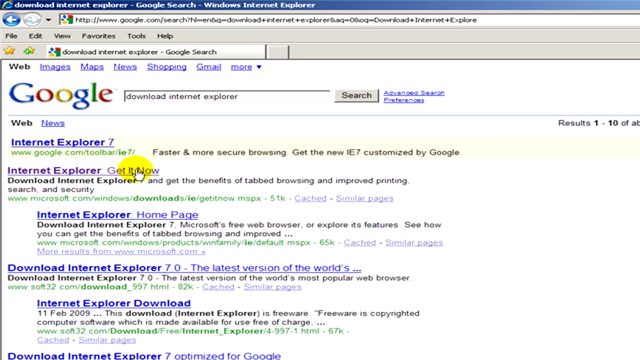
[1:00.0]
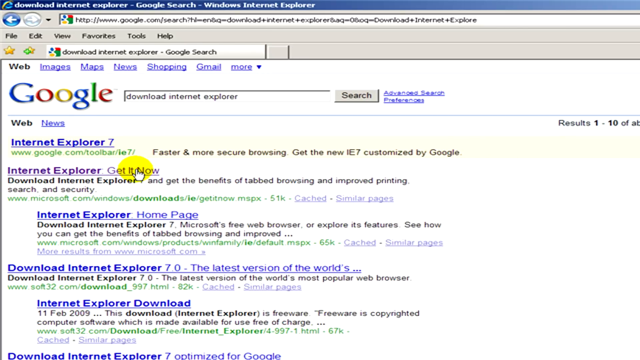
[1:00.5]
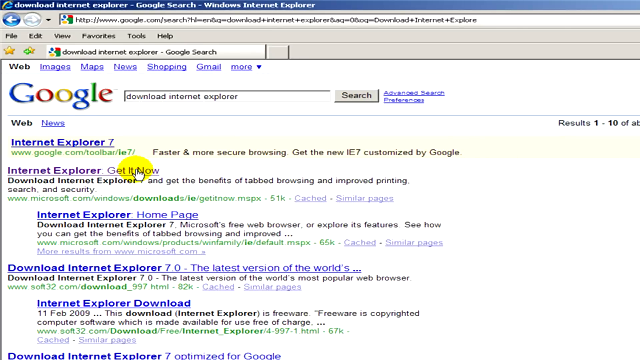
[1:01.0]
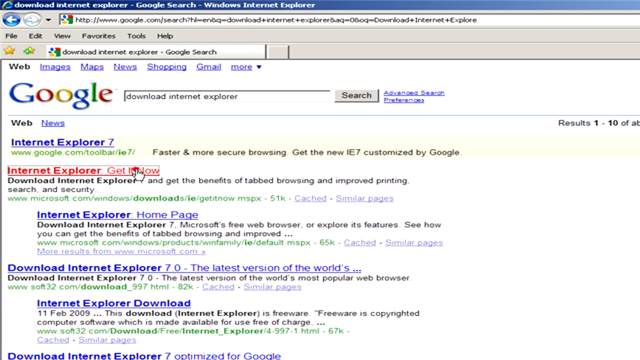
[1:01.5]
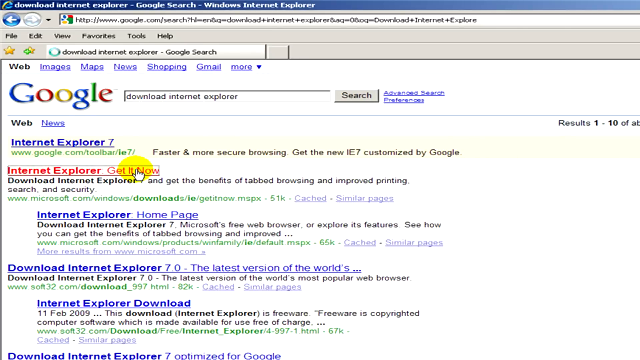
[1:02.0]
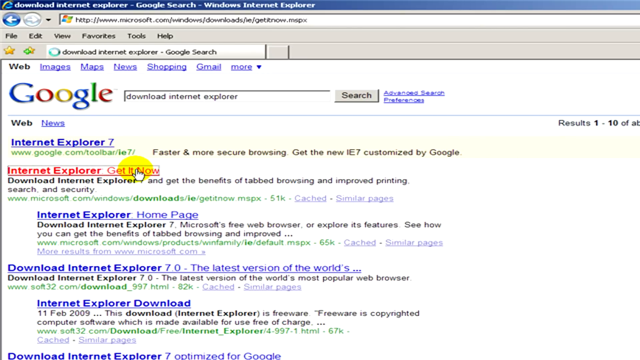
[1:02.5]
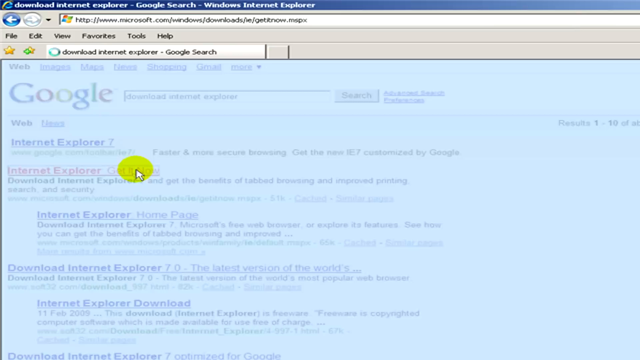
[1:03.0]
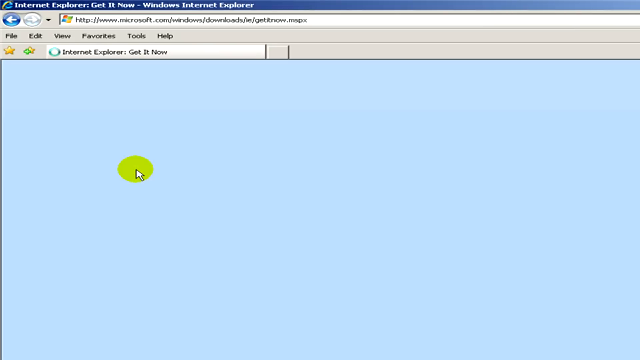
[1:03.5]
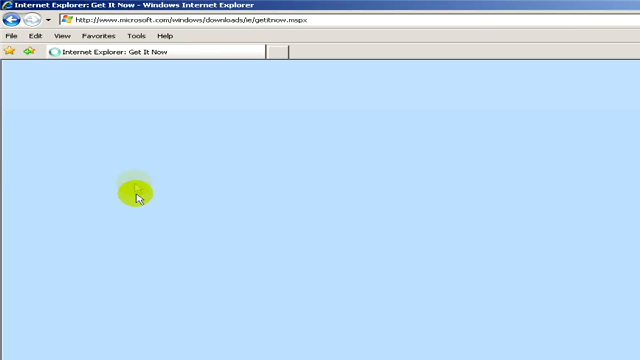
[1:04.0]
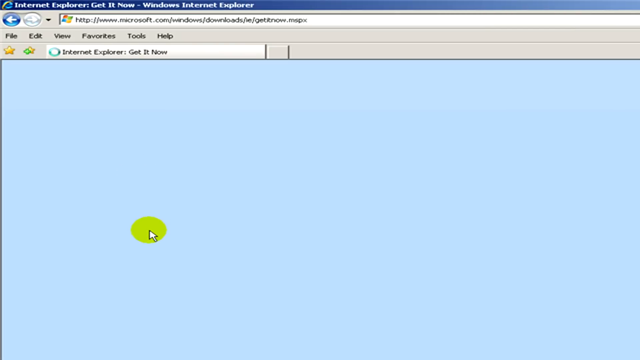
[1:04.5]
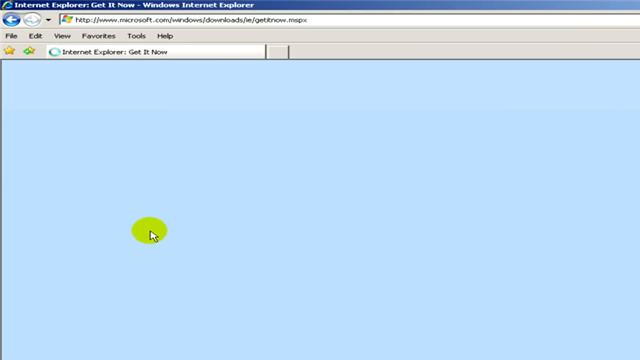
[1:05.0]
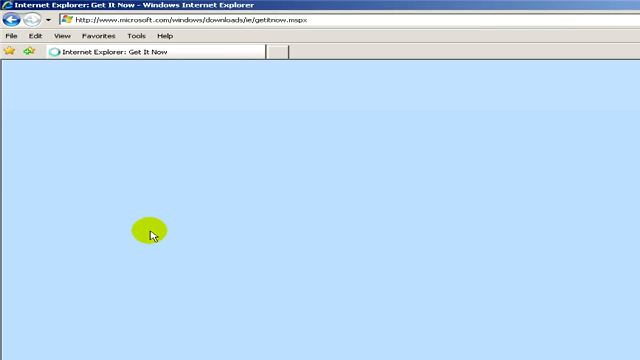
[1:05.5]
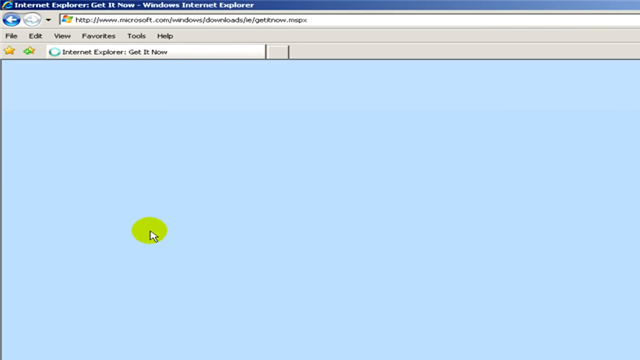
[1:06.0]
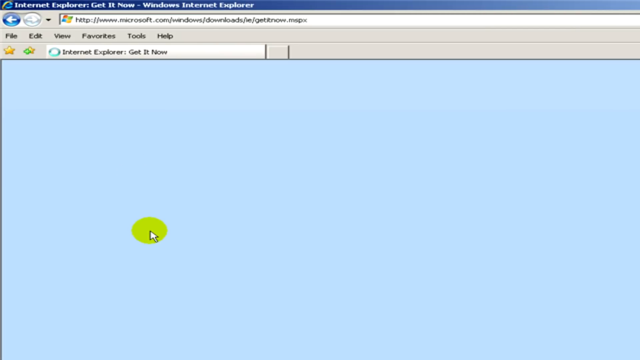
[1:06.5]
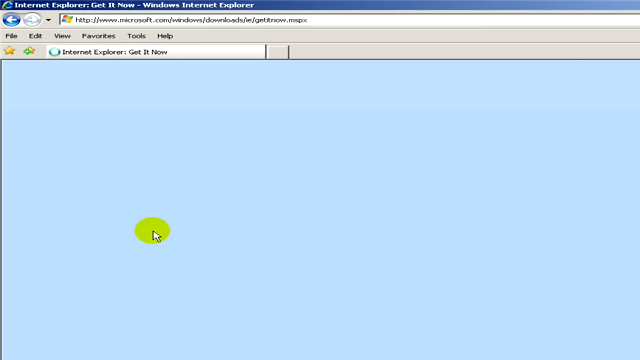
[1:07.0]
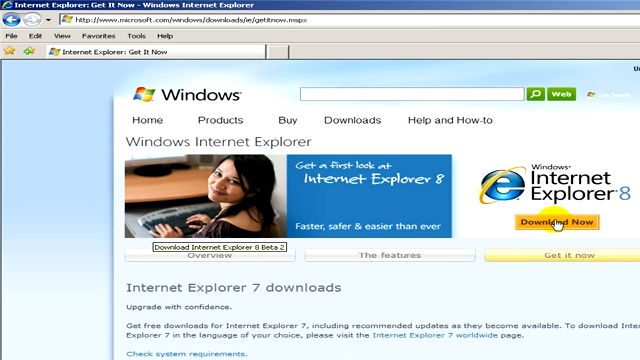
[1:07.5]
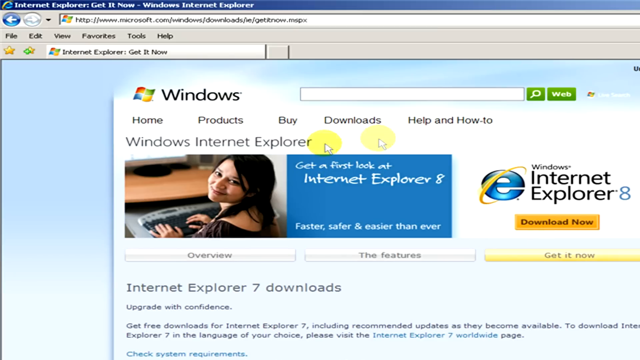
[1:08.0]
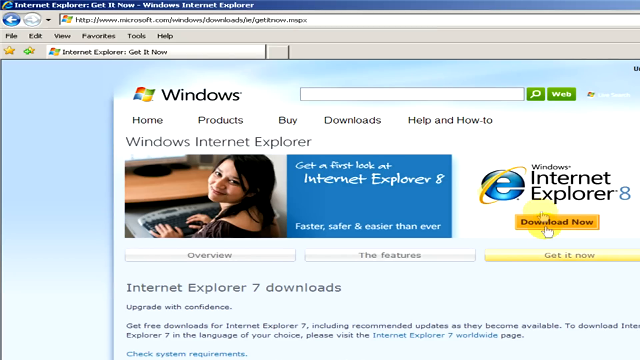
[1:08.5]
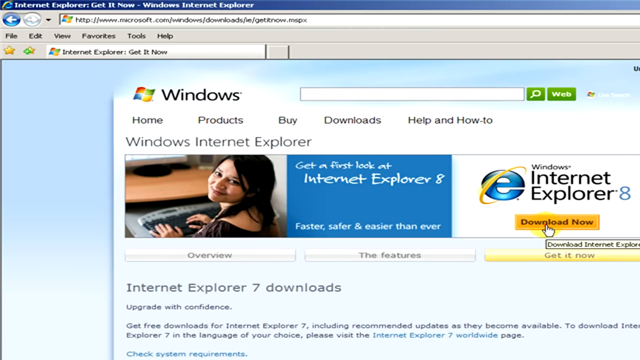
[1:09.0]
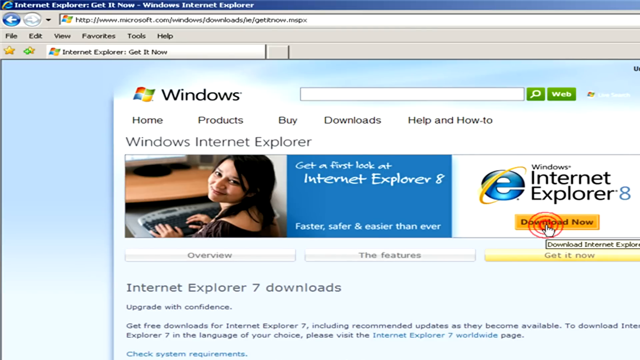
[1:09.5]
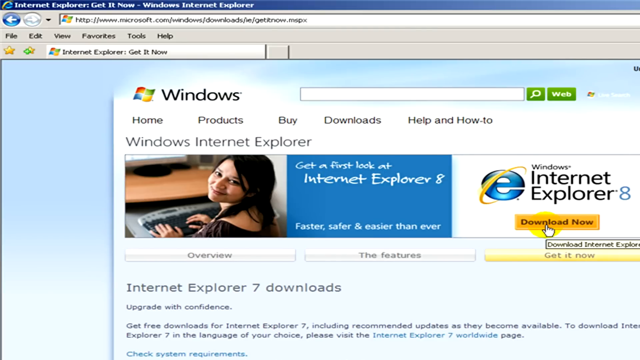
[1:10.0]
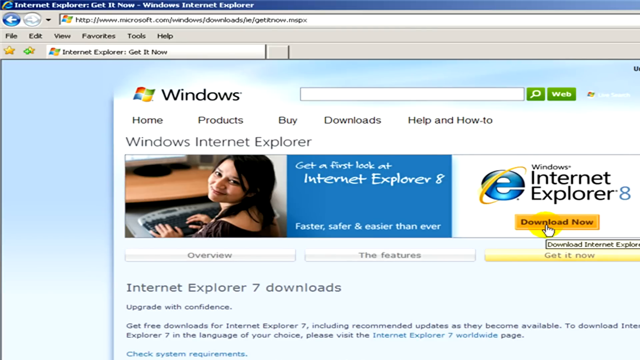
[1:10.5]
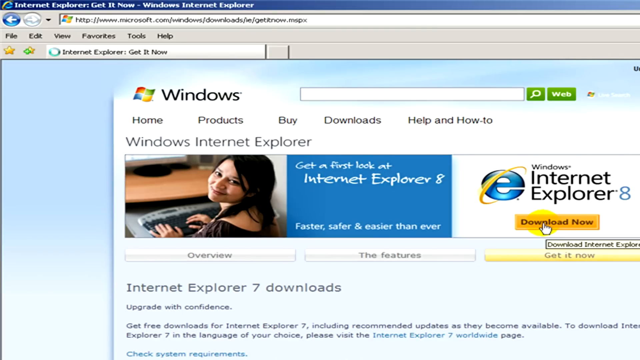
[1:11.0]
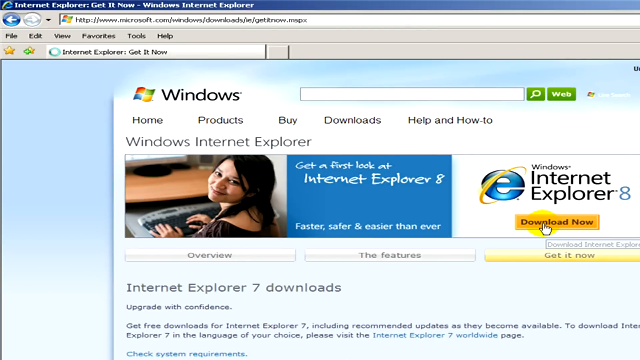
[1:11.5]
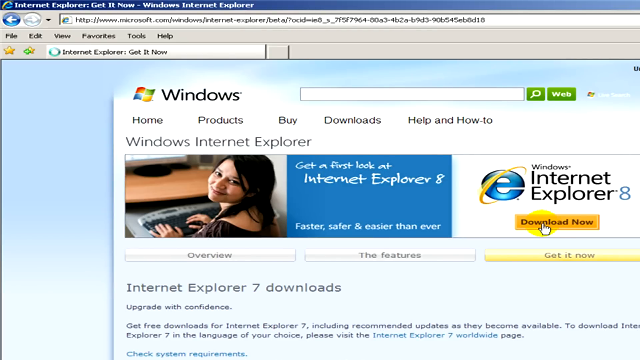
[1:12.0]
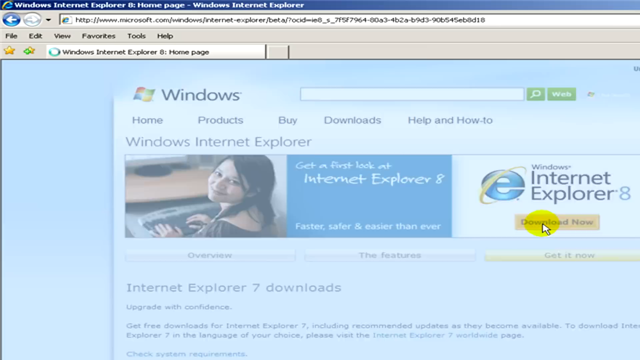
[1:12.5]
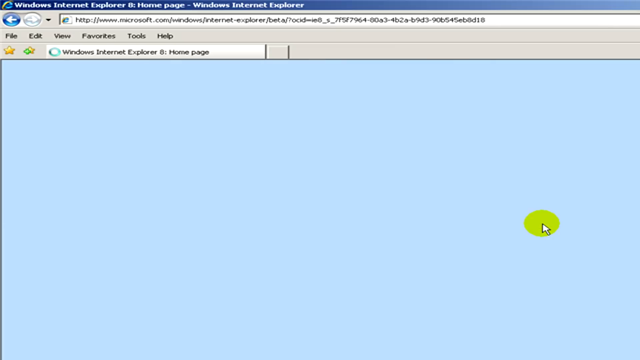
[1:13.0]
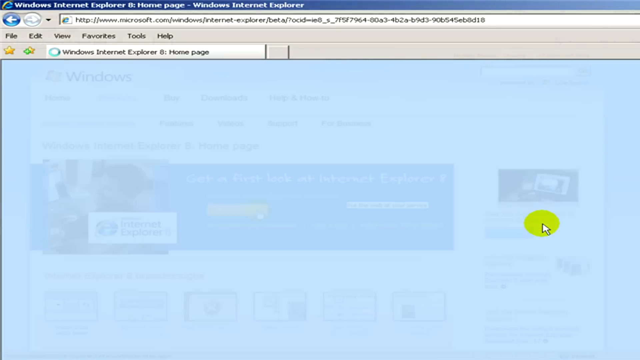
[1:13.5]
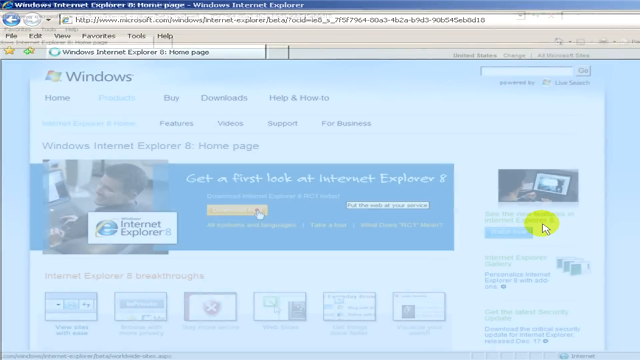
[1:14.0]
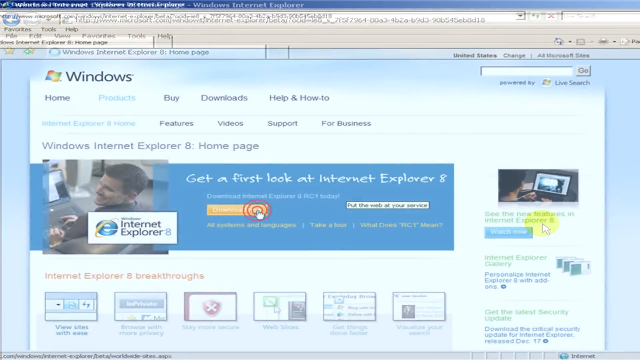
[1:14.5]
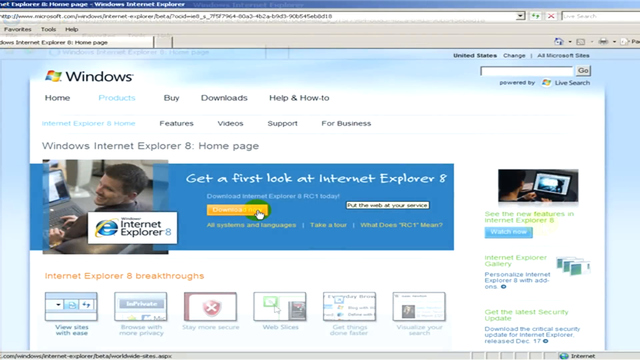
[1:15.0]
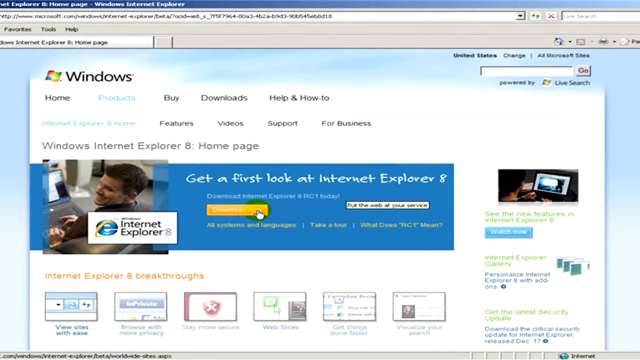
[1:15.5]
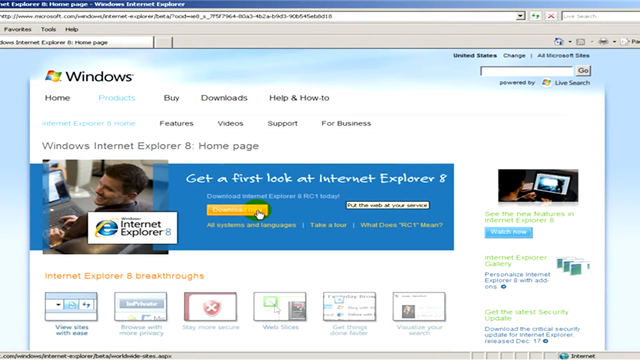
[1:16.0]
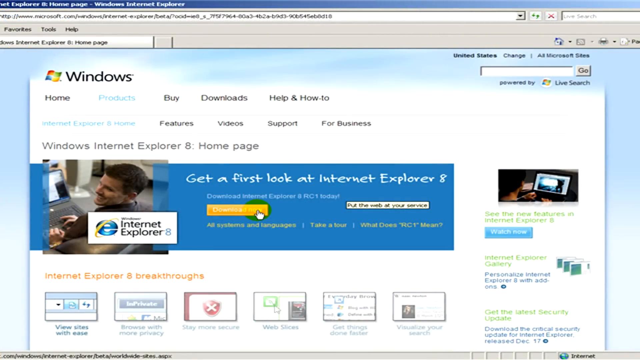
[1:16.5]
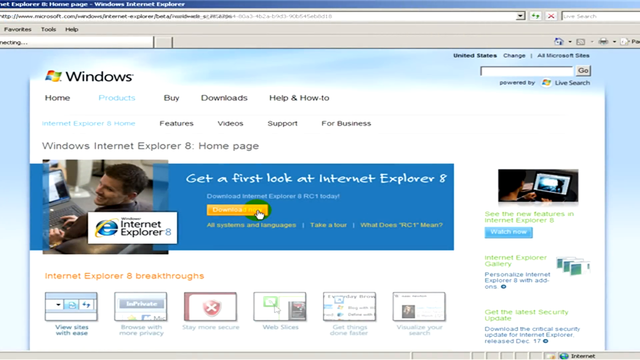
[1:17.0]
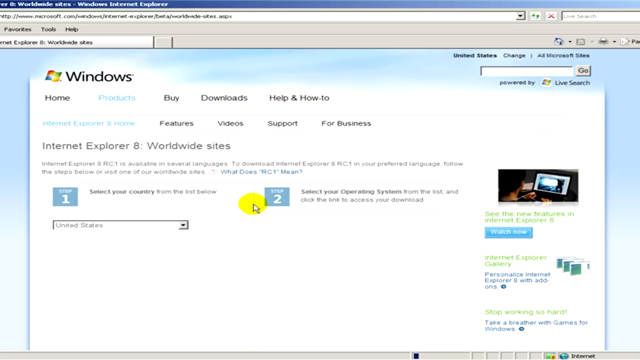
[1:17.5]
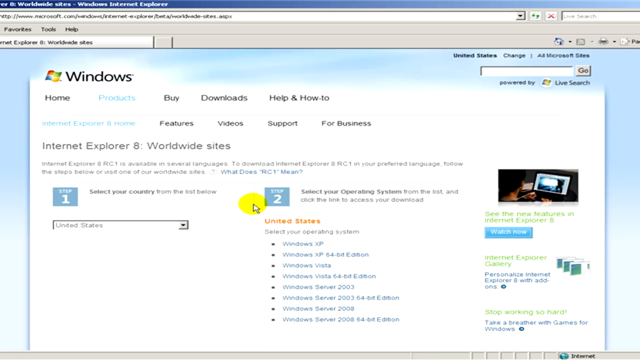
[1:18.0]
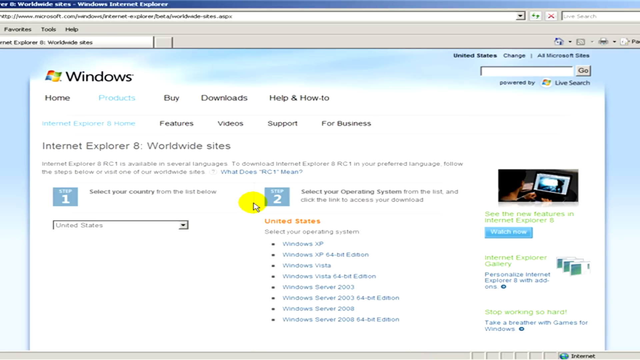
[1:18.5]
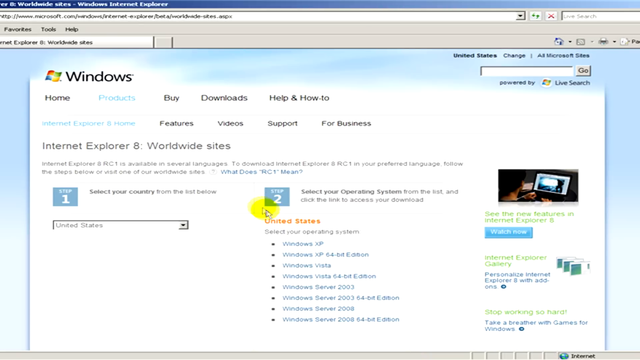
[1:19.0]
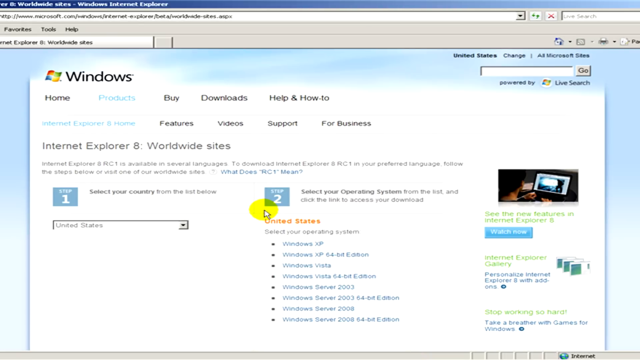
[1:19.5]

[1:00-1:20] The screen changes to the Internet Explorer "Get It Now" page, which shows that Internet Explorer, made by Microsoft, can be downloaded now for Windows. The main Windows Internet Explorer page has a static image of a woman, aged around 20 to 30, with black hair and her hands on a keyboard. The page then changes to an Internet Explorer 8 Worldwide Sites page, which includes information about the United States. After the download button is clicked, another Internet Explorer page appears with information about getting a first look at Internet Explorer 8, along with other details about Internet Explorer 8.